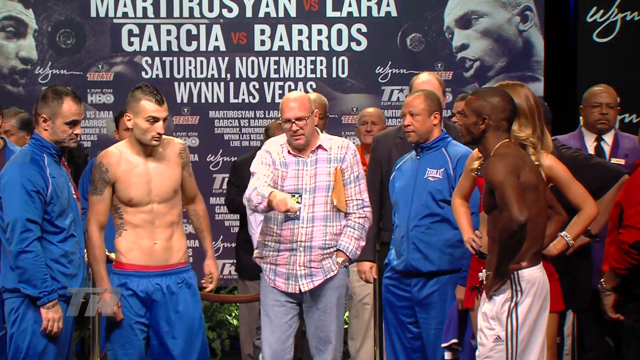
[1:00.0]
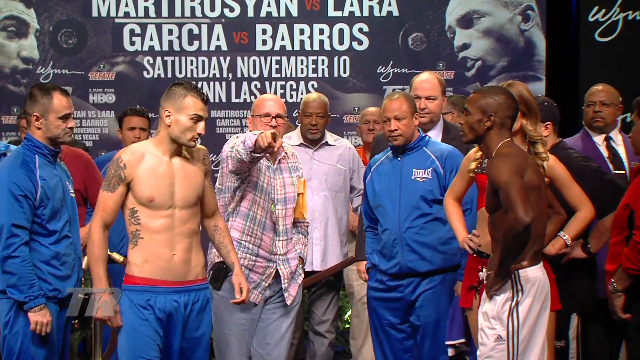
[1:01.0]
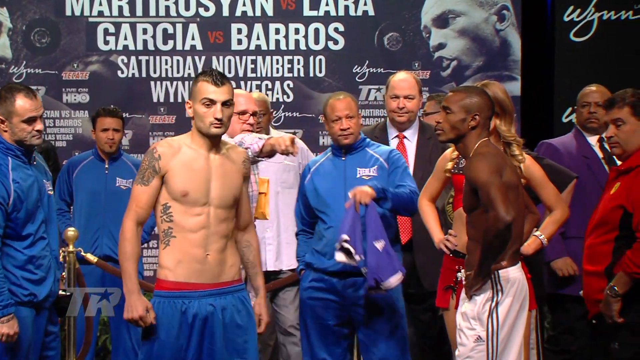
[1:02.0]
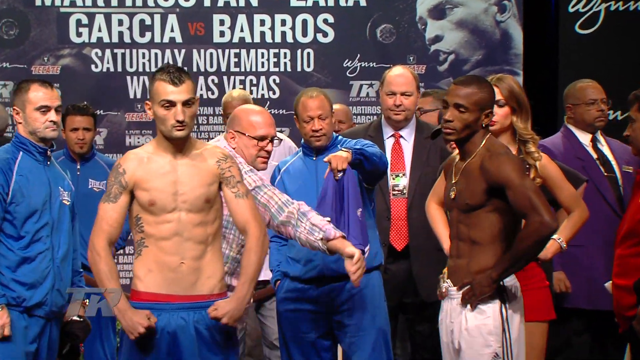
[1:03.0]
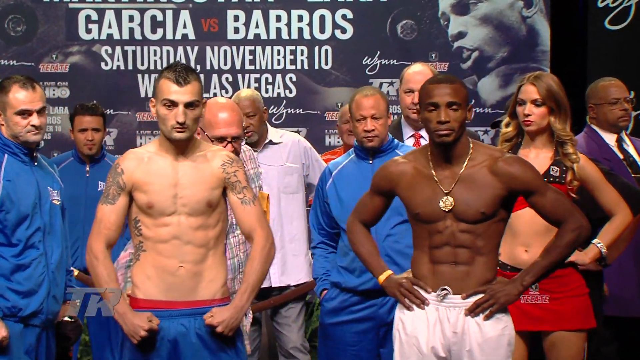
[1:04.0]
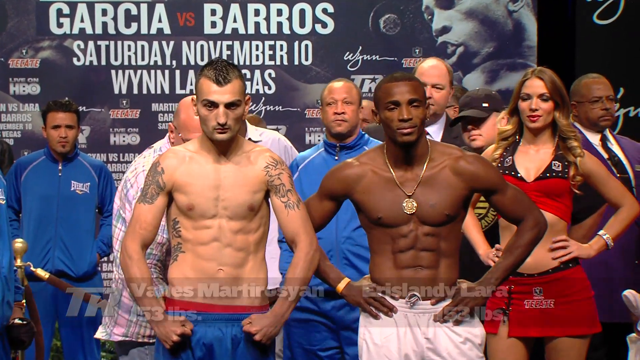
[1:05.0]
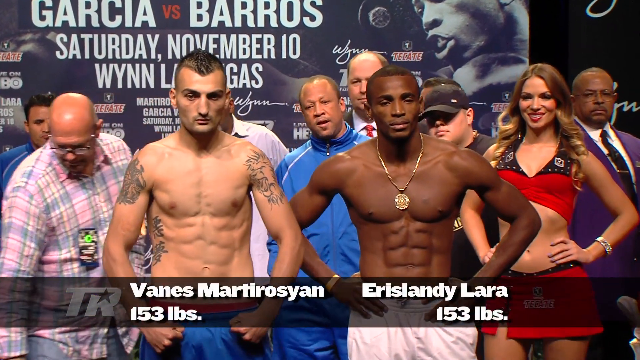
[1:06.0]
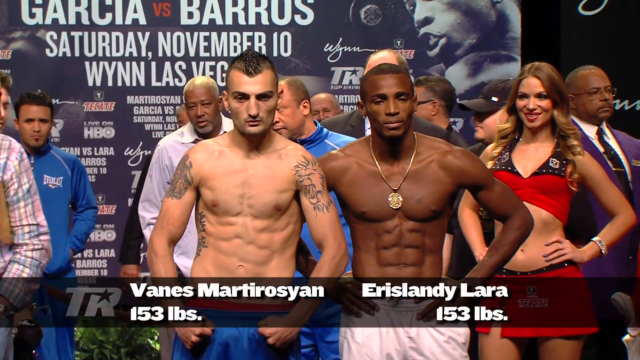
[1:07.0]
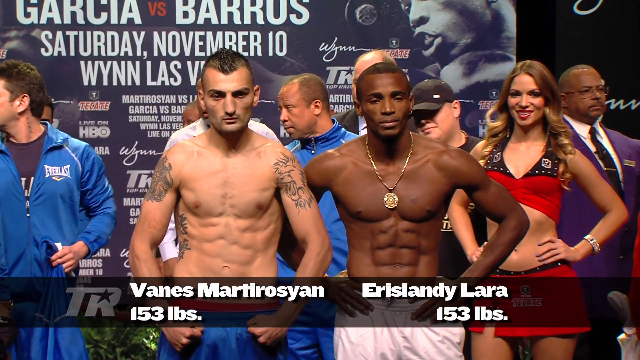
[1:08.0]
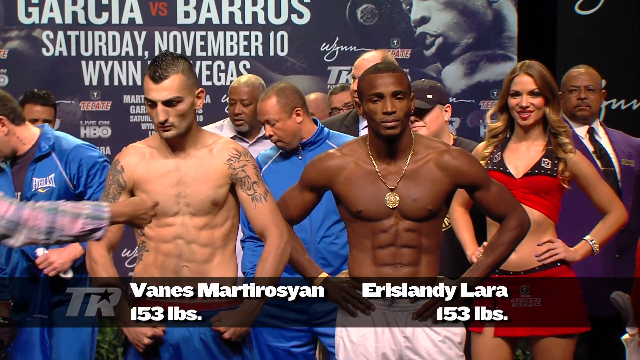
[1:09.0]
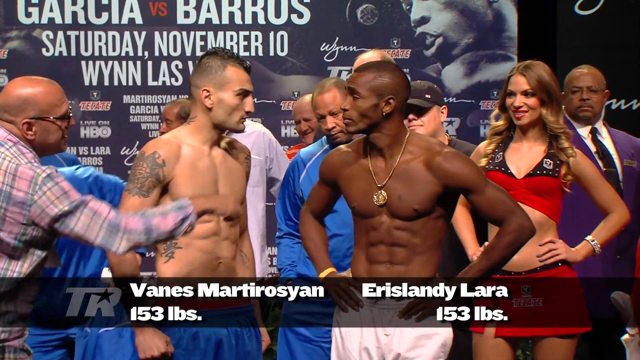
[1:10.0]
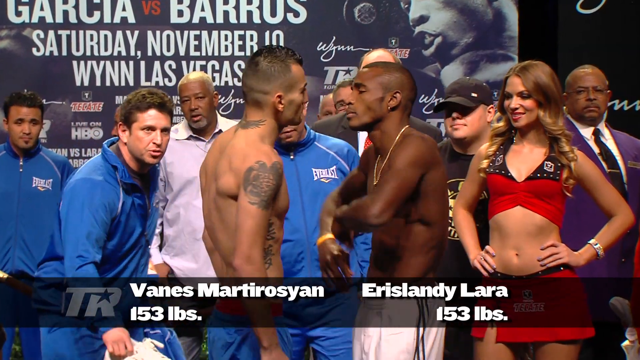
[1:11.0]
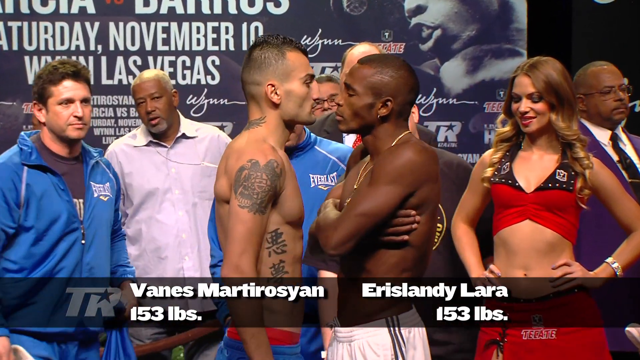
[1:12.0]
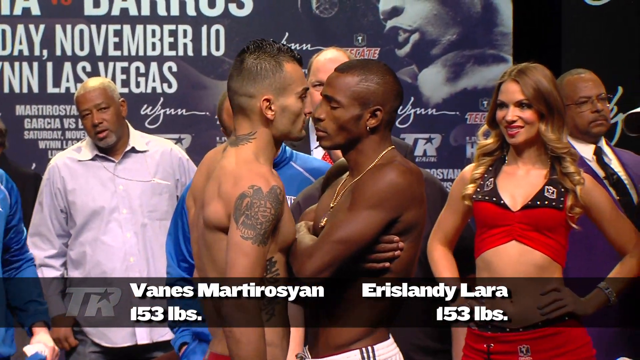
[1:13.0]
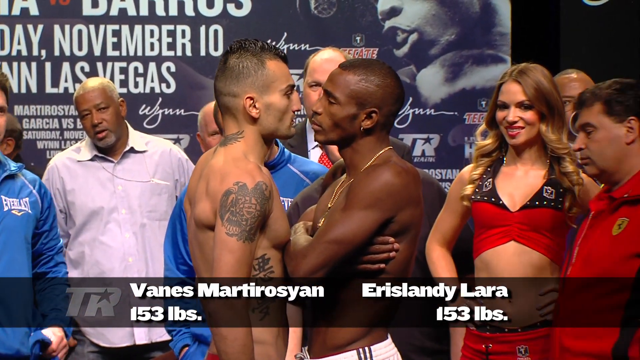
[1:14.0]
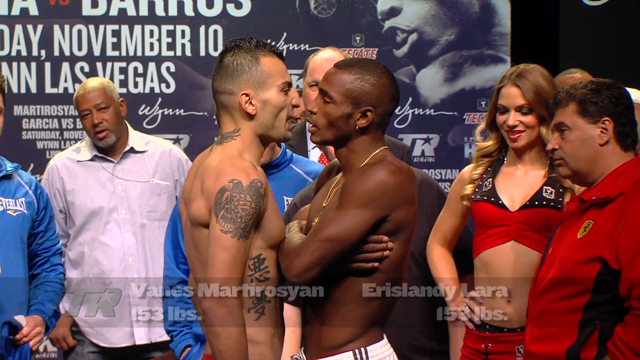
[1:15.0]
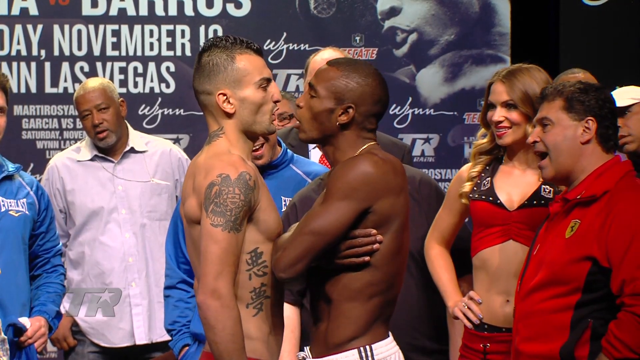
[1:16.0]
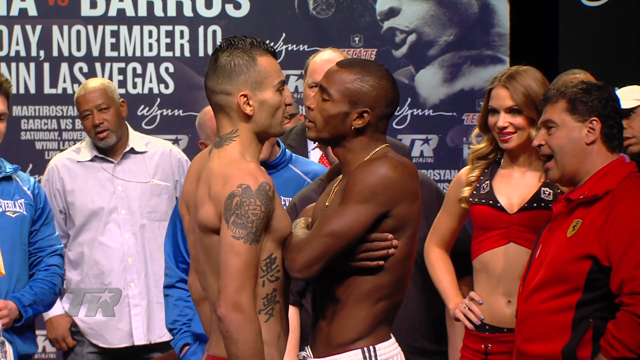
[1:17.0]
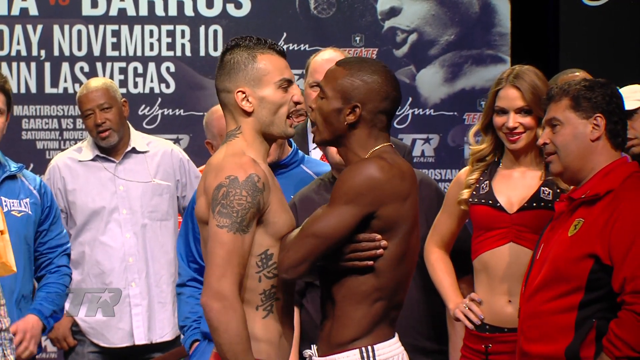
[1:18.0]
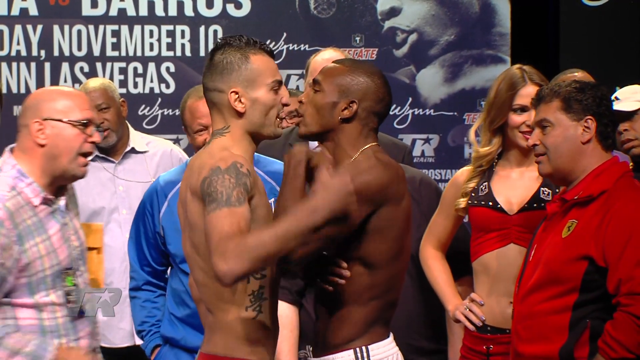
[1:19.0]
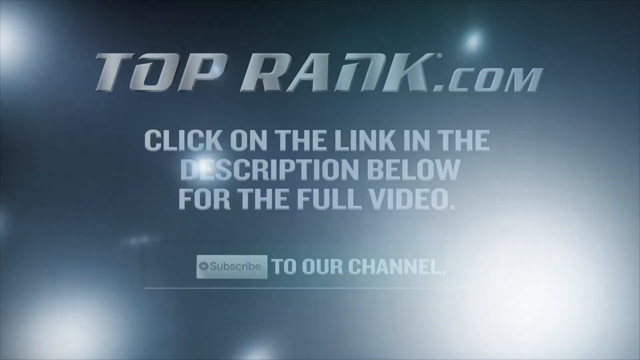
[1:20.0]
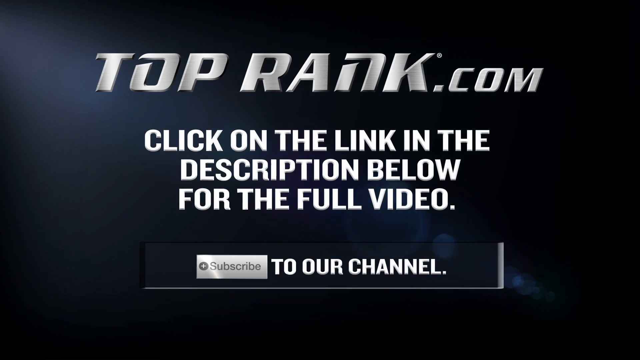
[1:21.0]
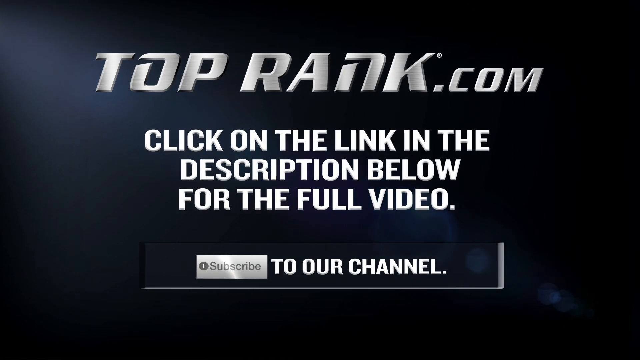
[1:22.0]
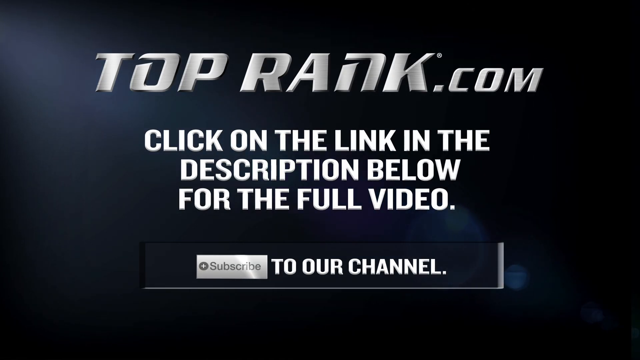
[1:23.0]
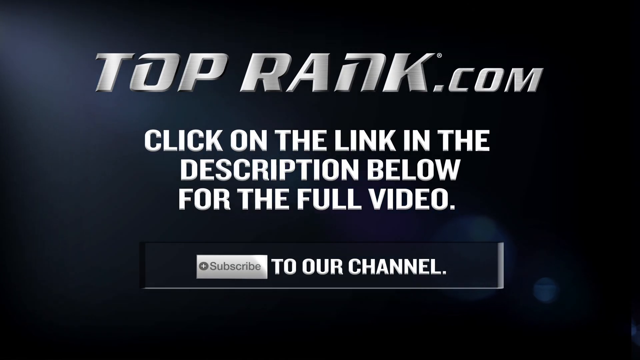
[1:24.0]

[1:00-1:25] Both fighters are in the frame. The dark-skinned fighter does not seem to put on a shirt; the black tank top is not worn but is just passed along at the side. They both pose for the picture, the Caucasian fighter standing slightly in front of the dark-skinned fighter, who wears a gold medallion on a necklace; the Caucasian fighter does not have his bead necklace on. Their names appear below: the white fighter is "Vance Martirosan", "153 pounds", and the black fighter is "Arislandy Lara", "153 pounds". Arislandy stays still with both palms on his hips in a confident, spread-out pose, while Vance leans from side to side with a less confident pose. A man in a flannel shirt and glasses, with a balding head, asks them to turn so they face each other. Vance moves closer with his arms by his sides while Arislandy turns with his arms crossed. Vance leans in, putting his chest against Arislandy's arms, and as they get very close they start speaking to each other, probably trash talking, then wave their arms at each other as if to show they will take each other down. The video switches to an ending screen reading "toprank.com click on the link in the description below for the full video" and "subscribe to our channel".